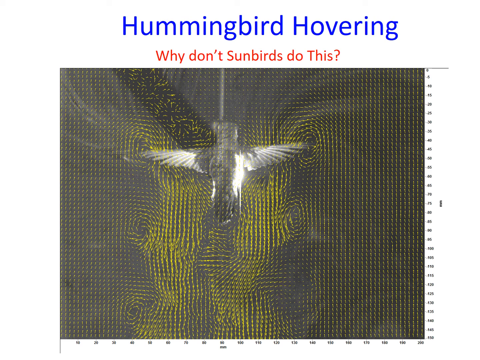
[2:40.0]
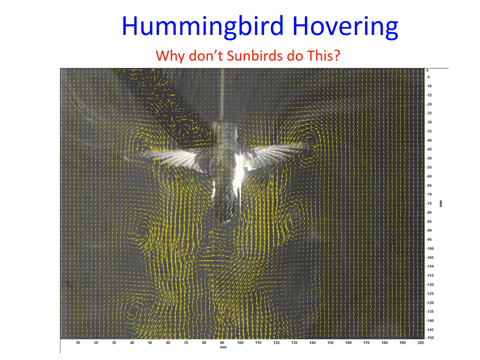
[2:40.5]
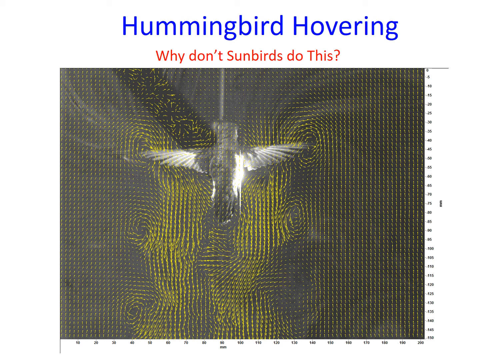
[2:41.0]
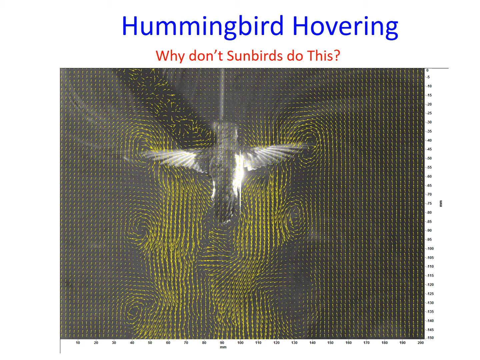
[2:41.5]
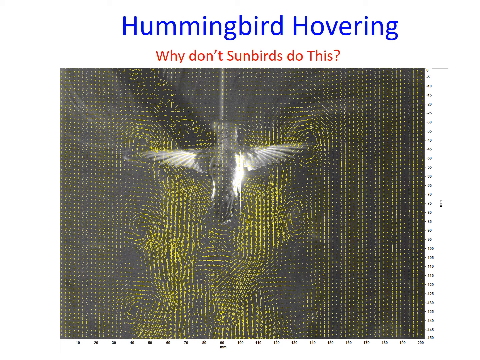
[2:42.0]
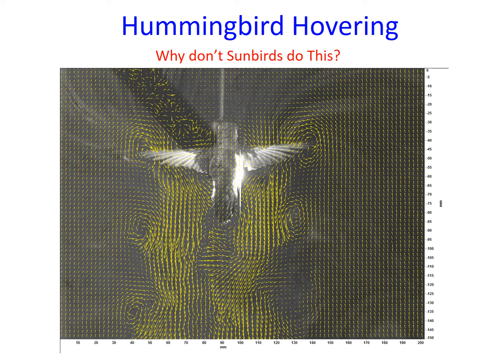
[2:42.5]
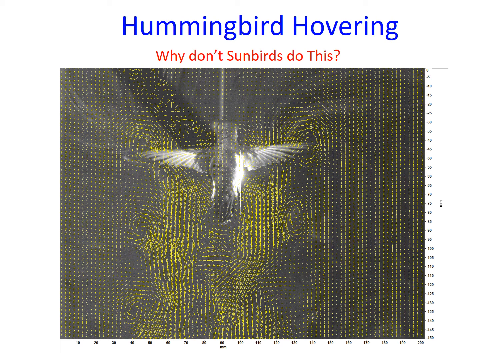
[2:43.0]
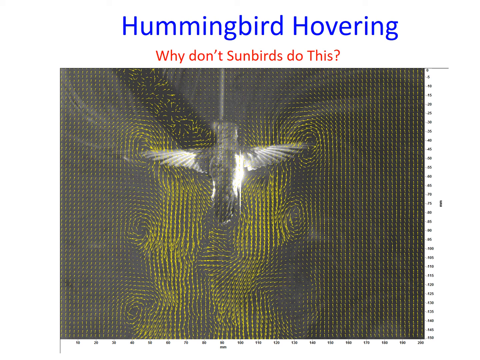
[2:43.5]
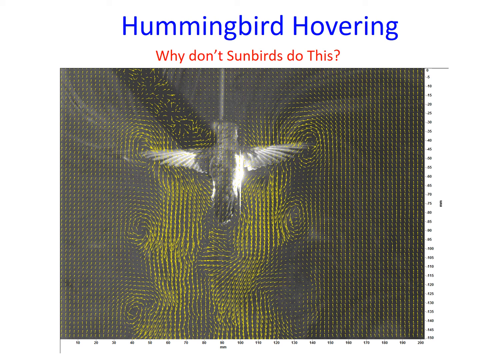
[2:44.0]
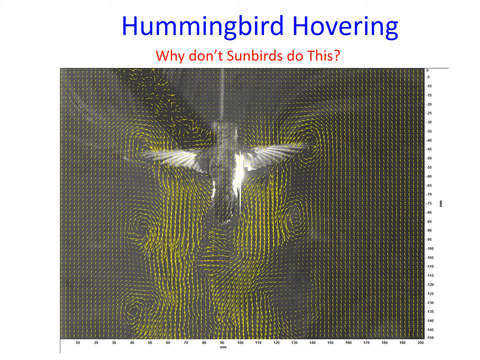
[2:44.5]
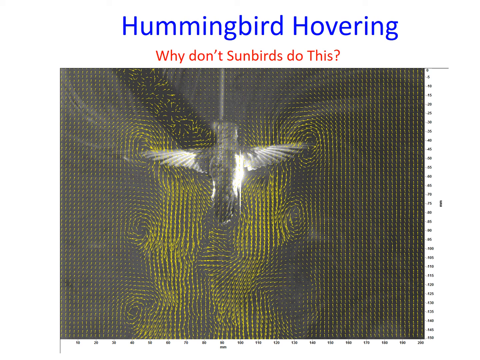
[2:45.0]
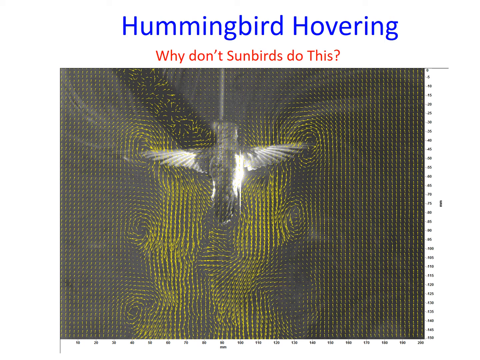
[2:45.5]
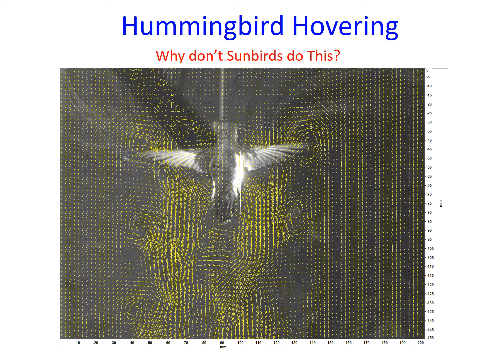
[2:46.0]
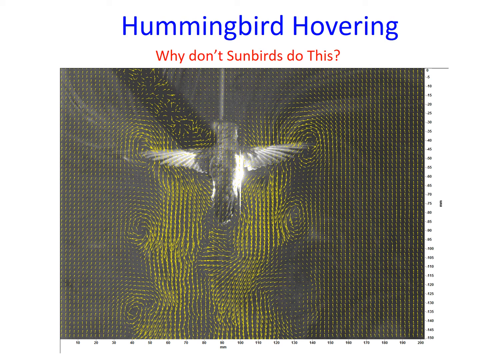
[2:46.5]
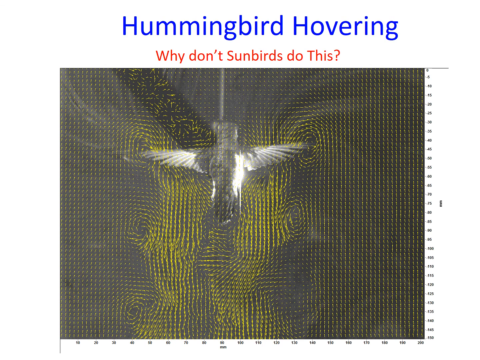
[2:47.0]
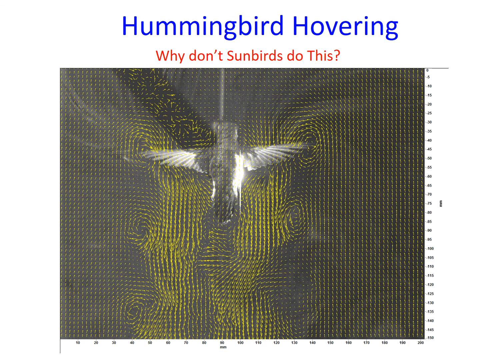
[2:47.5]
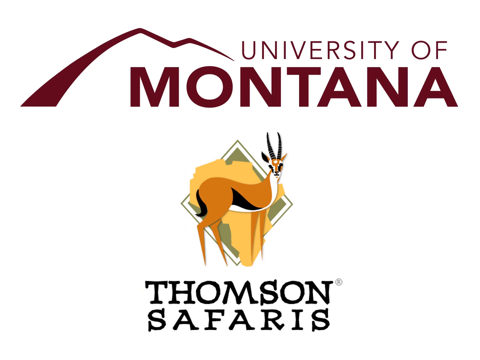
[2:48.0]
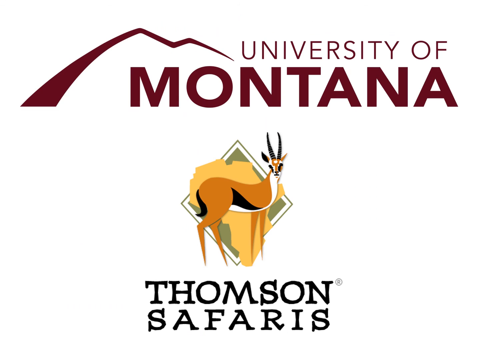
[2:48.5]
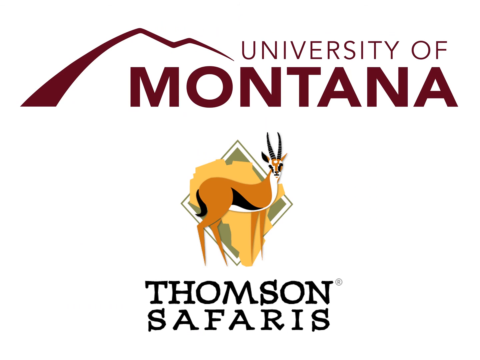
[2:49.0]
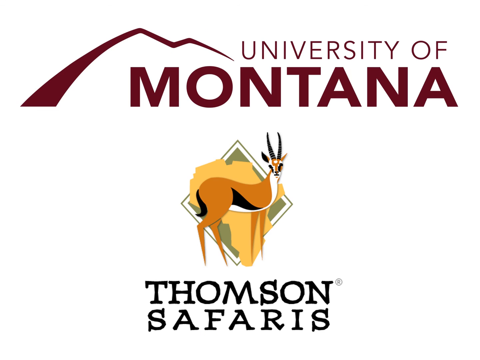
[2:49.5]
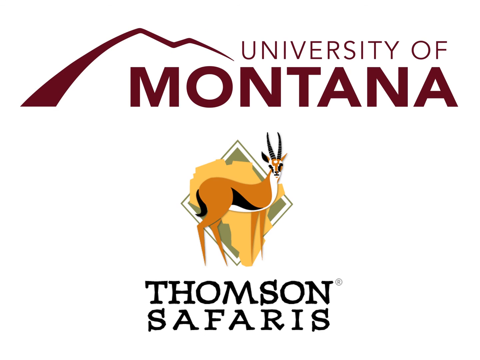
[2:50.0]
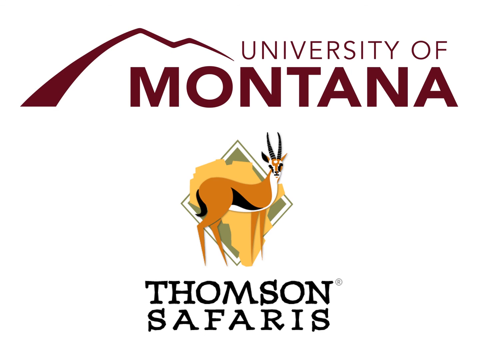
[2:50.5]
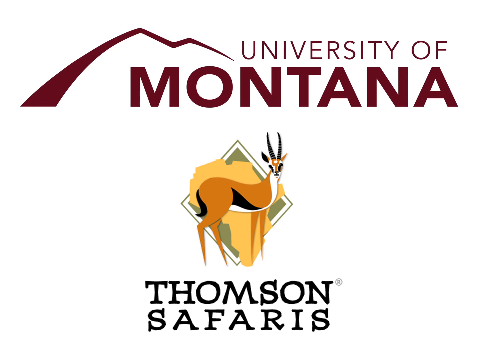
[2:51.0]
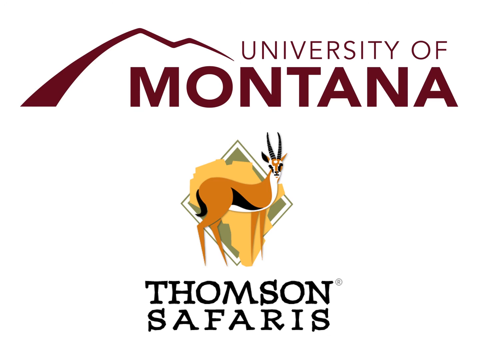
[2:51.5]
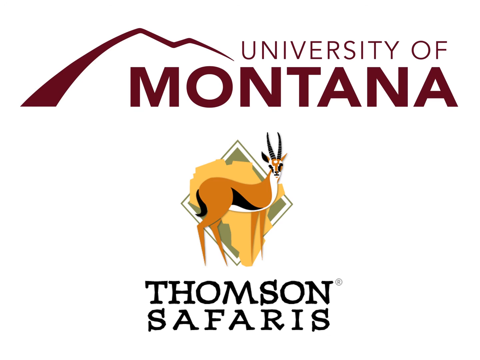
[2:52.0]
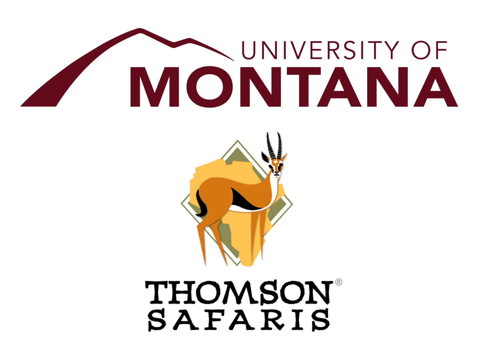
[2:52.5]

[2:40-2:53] A bird moves against the black background with many tiny yellow dots. Text then reads "University of Montana, Tallahassee," and a logo with an elk or some deer-like animal appears in the middle of the scene, with the University of Montana logo in the background showing the outline of a mountain in a darker color.